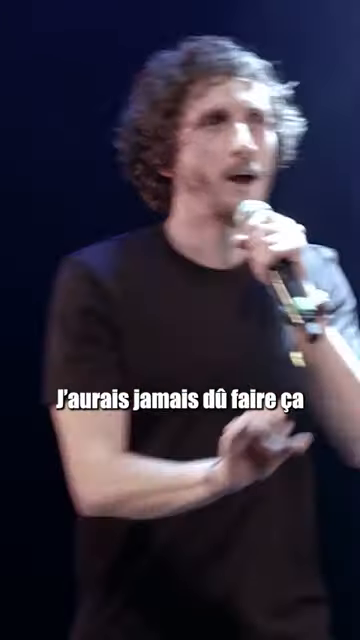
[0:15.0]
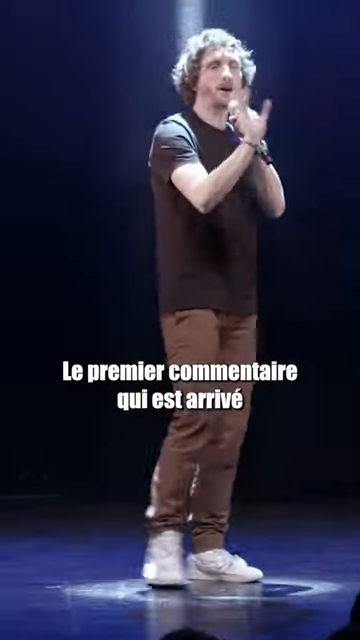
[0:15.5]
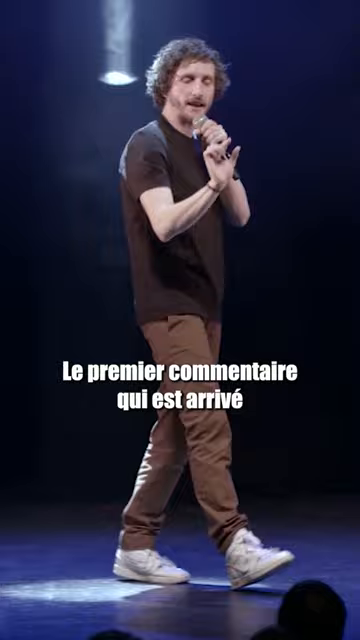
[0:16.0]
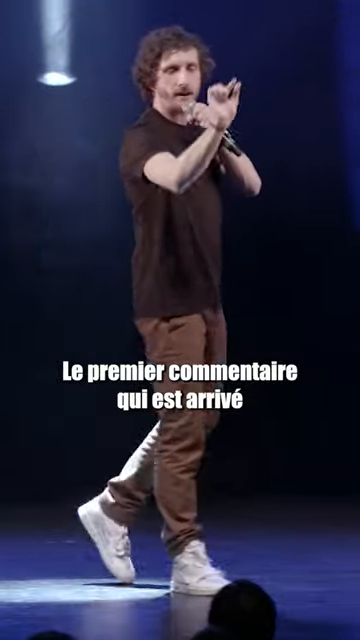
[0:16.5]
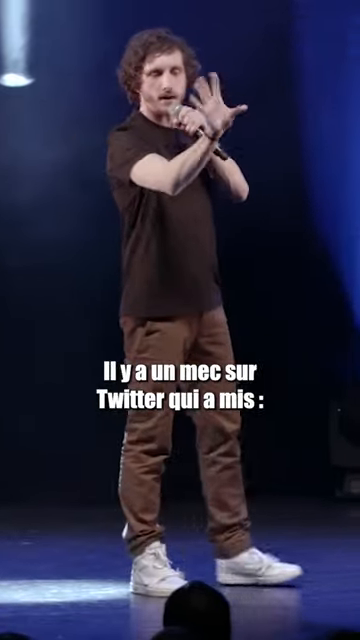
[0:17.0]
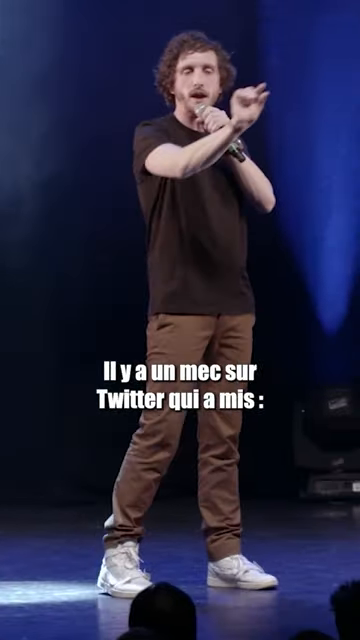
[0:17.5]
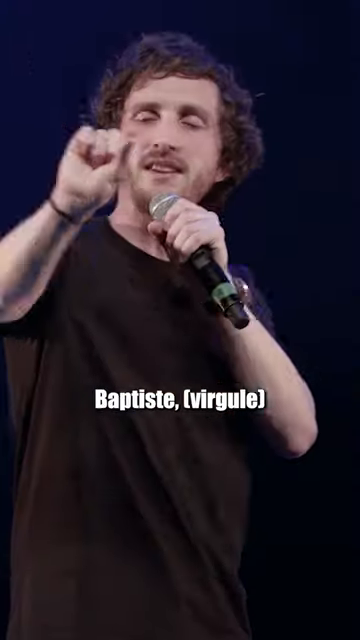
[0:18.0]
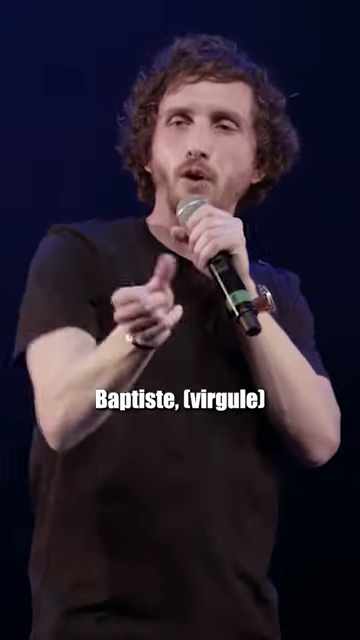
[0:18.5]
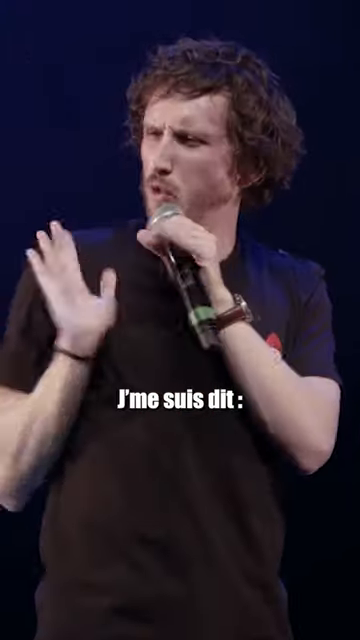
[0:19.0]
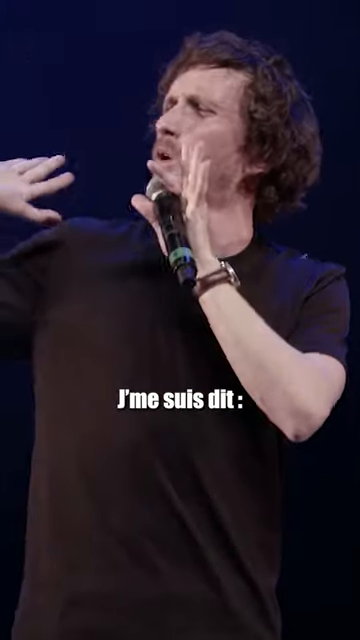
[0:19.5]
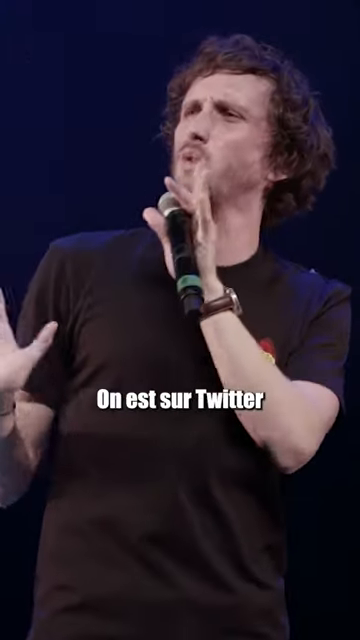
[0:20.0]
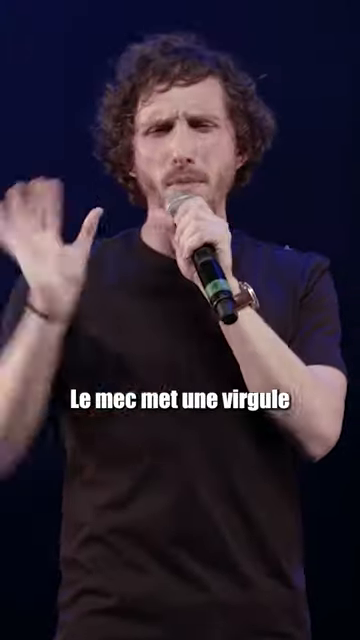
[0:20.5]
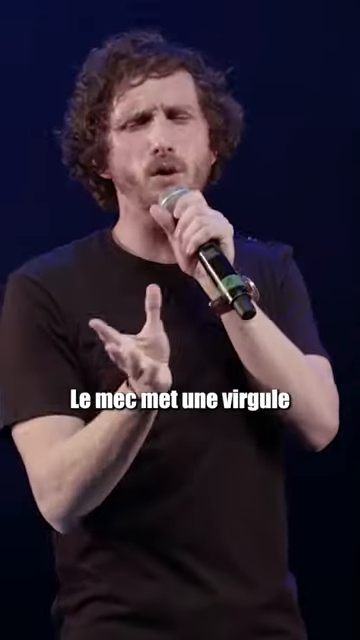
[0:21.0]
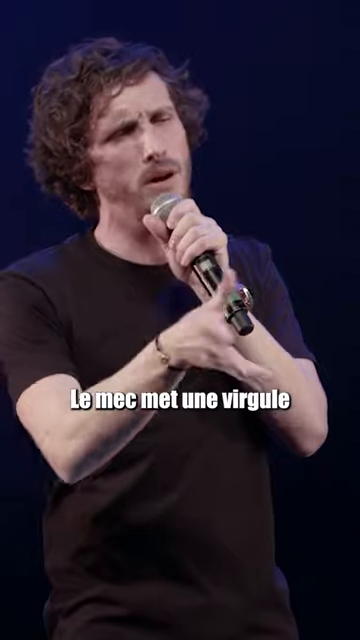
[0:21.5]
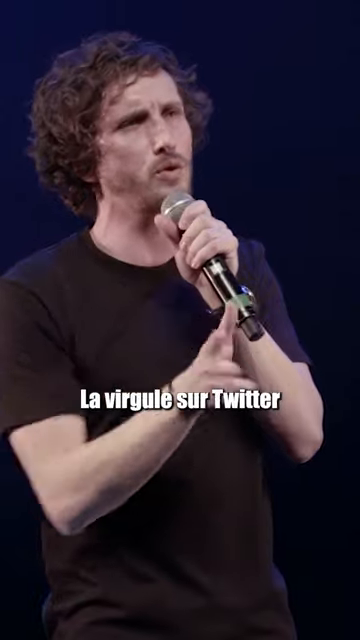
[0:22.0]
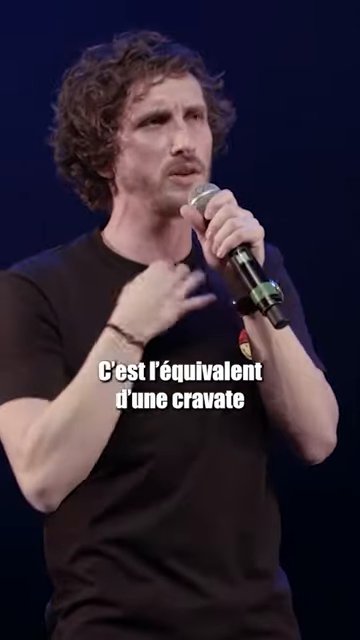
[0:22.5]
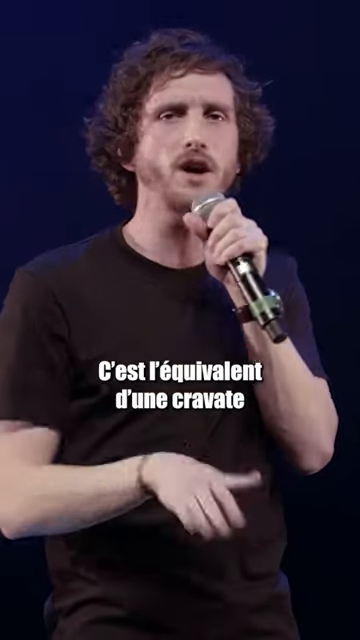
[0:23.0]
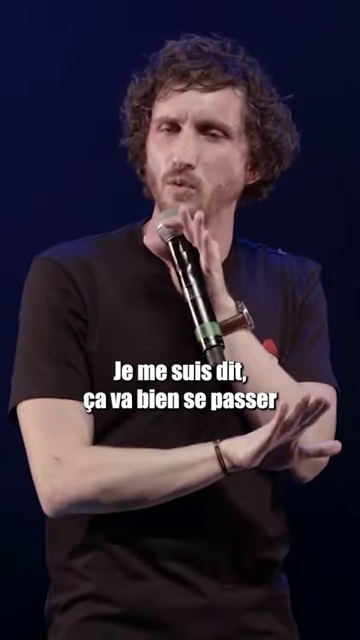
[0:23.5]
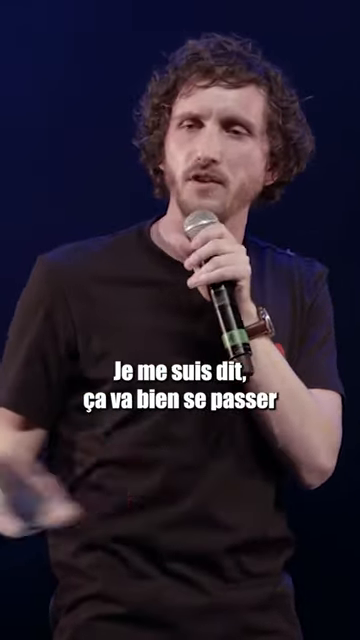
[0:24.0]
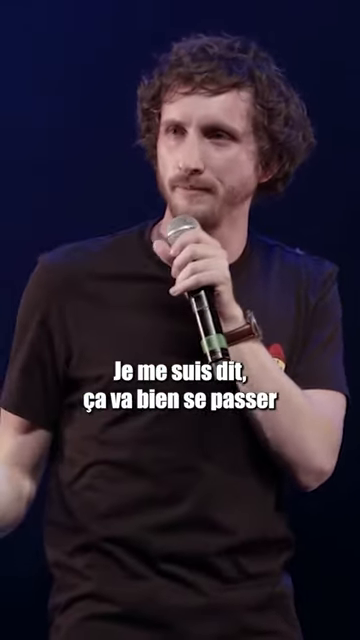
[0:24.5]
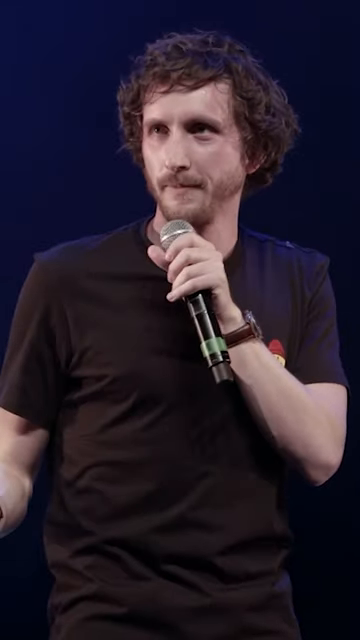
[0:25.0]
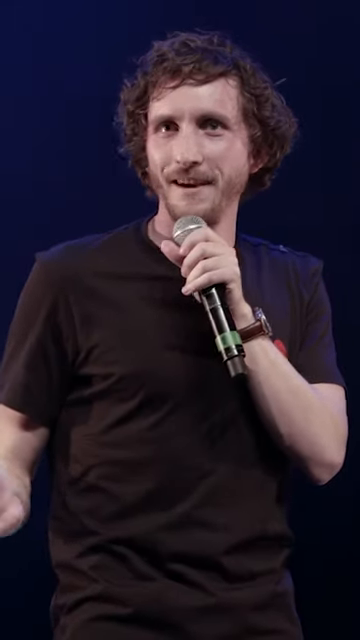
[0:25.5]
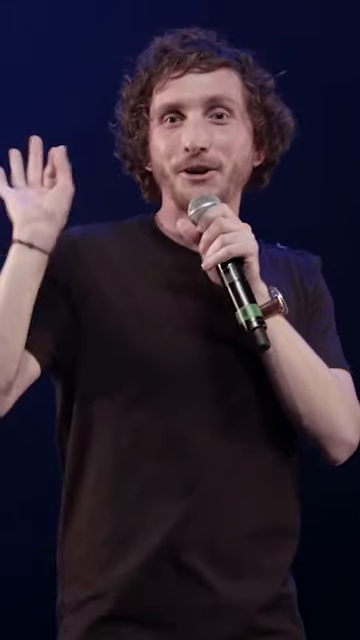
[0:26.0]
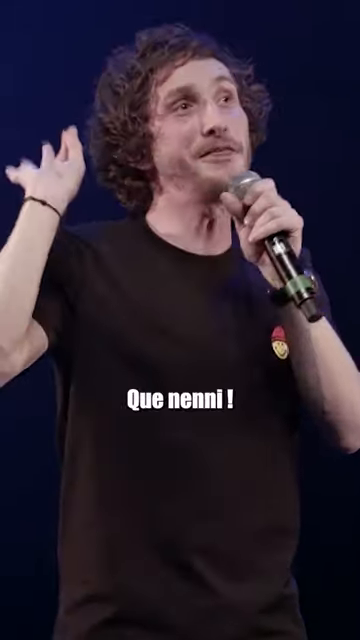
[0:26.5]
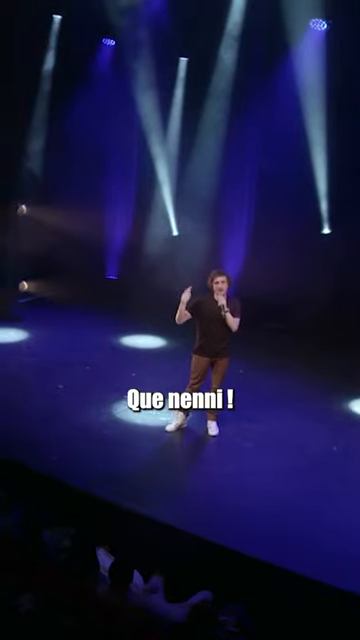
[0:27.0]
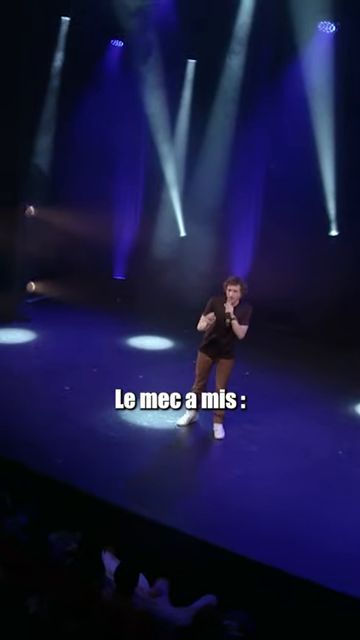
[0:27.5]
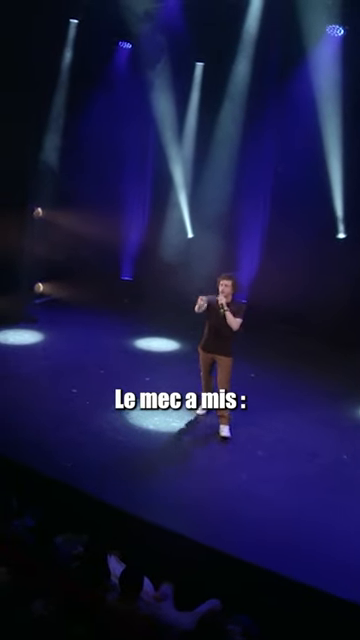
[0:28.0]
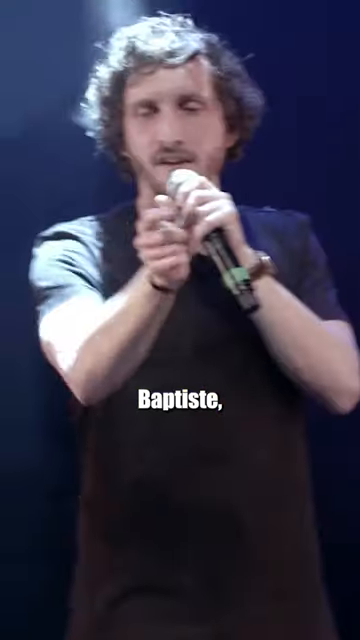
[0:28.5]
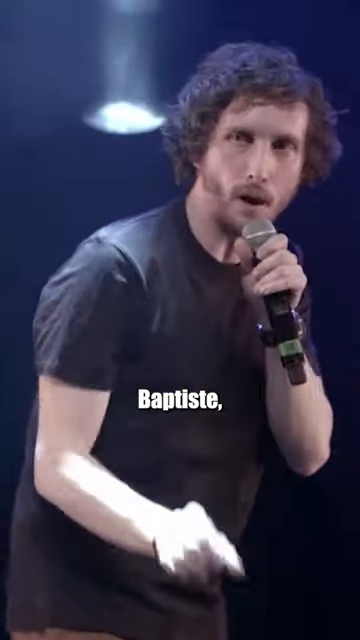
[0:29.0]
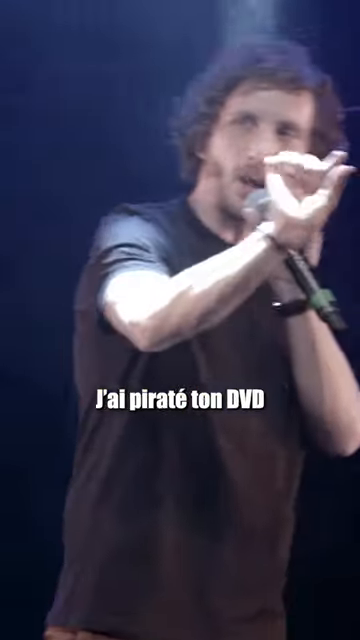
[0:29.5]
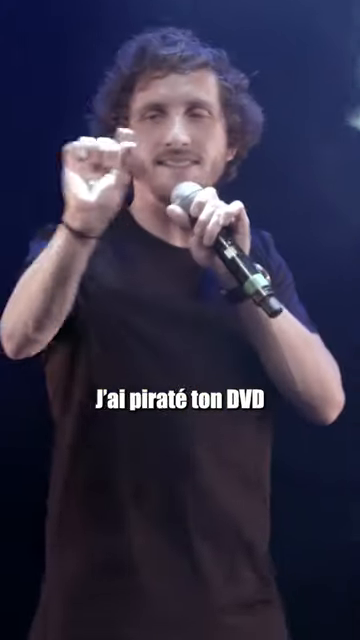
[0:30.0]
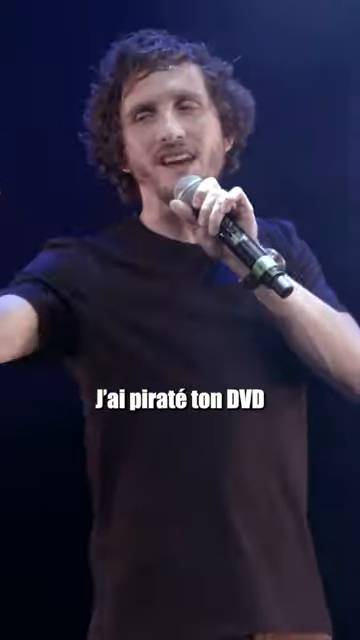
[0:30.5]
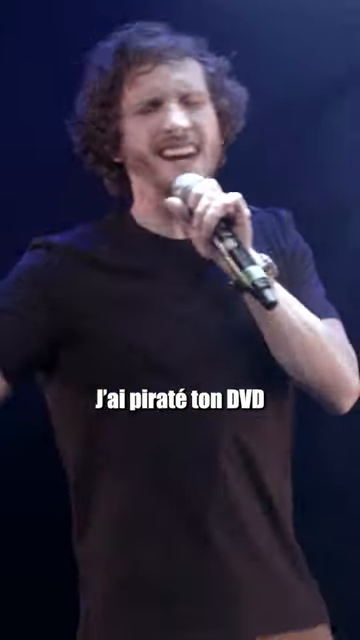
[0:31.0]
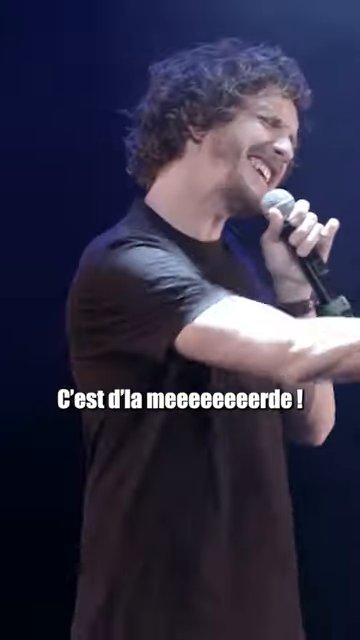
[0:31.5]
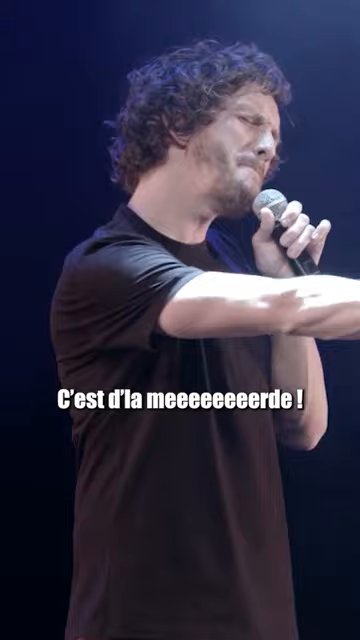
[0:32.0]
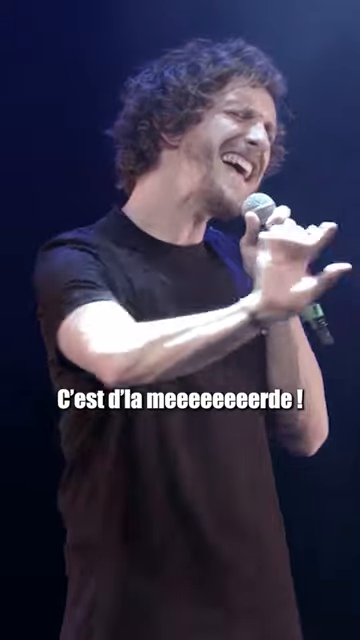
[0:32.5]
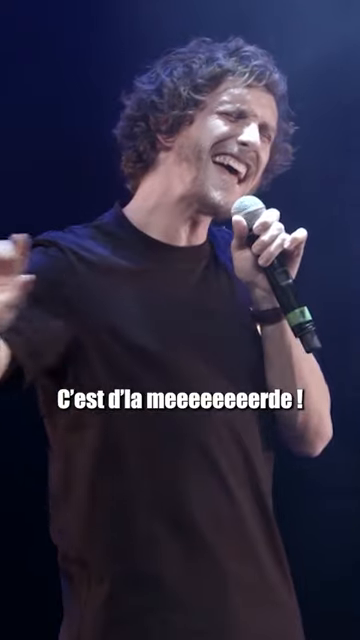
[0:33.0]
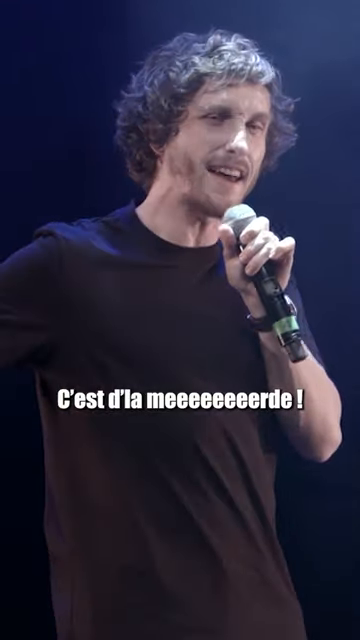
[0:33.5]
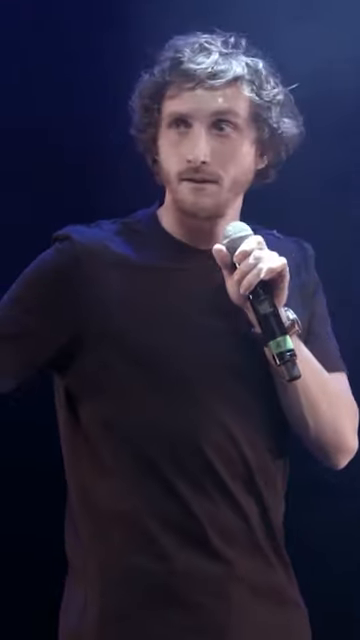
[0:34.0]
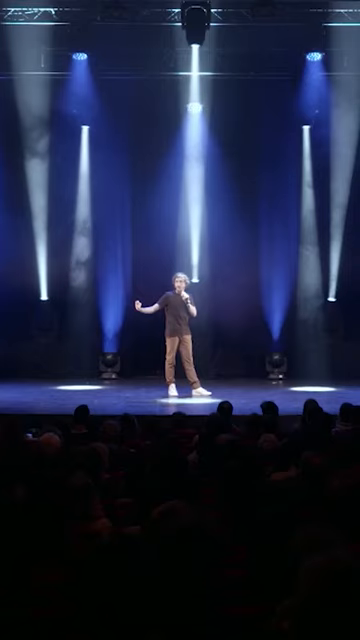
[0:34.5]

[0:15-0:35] The man continues talking at the camera, waving his hands around. A wide-angle shot shows that the stage is fairly large, with several spotlights seemingly shining down. He looks a little sweaty but is very animated. When the camera pans back, the silhouettes of people seated there are visible, so it looks like a pretty full house, at least from what can be seen. He wears a bracelet on his right wrist, and his brown shirt has a small orange logo on the left-hand side.